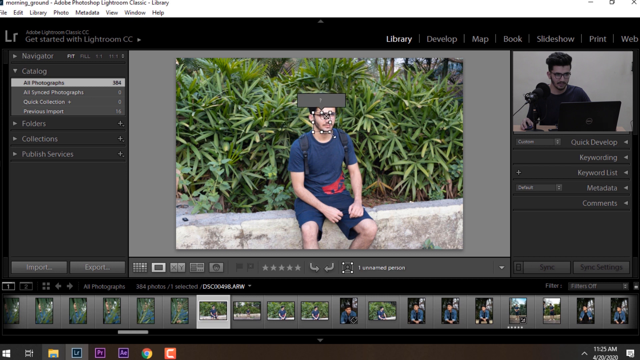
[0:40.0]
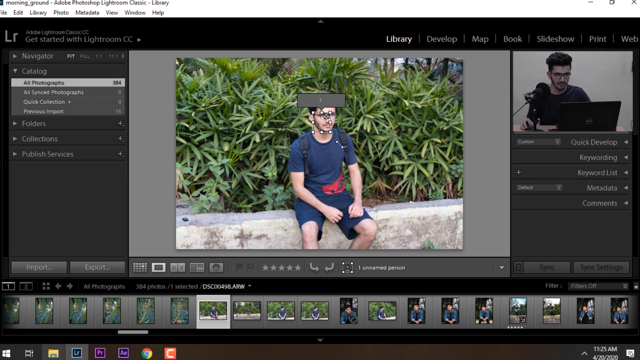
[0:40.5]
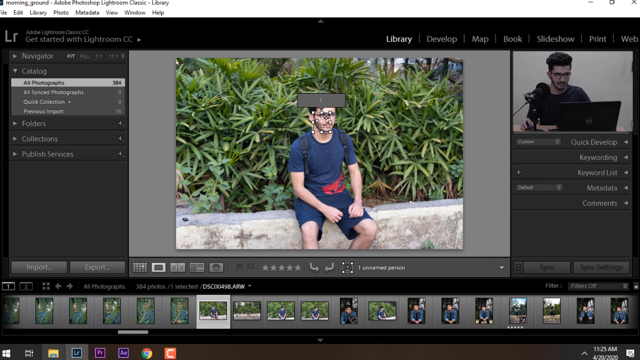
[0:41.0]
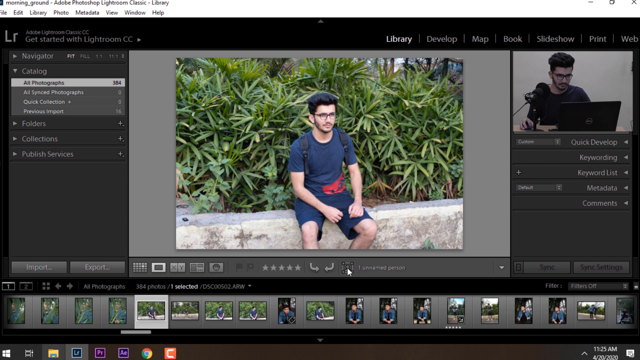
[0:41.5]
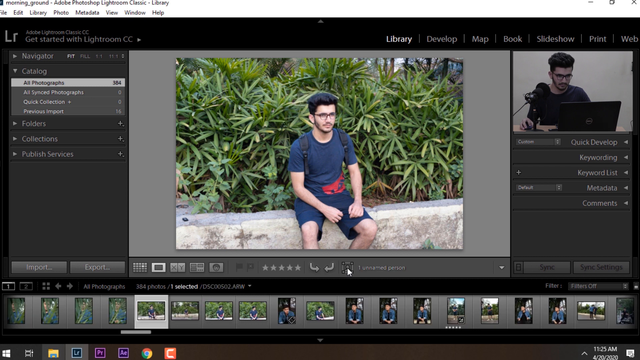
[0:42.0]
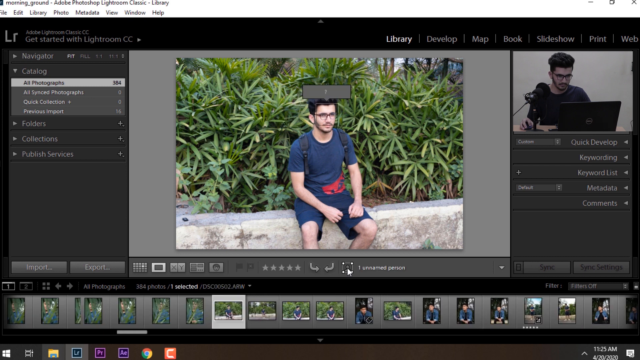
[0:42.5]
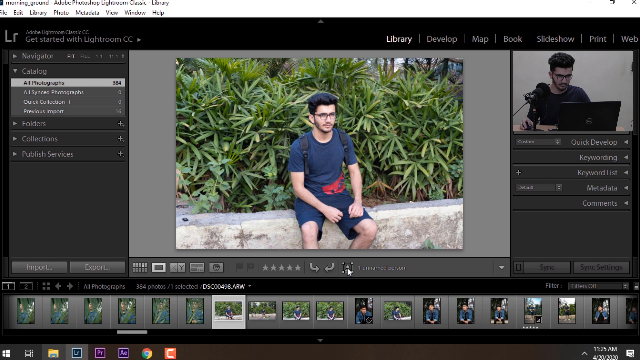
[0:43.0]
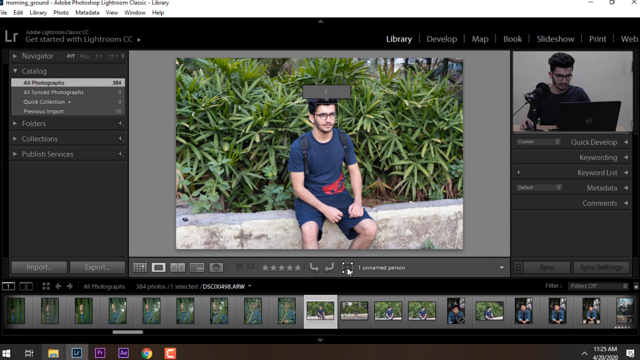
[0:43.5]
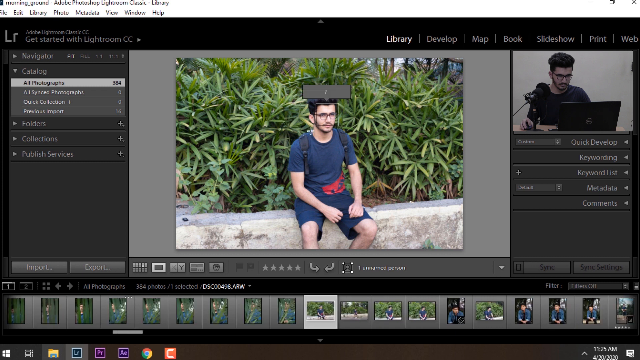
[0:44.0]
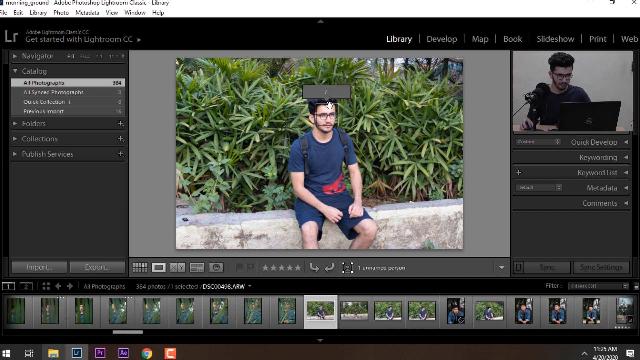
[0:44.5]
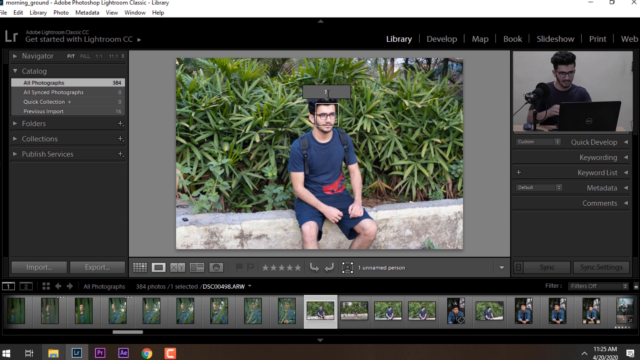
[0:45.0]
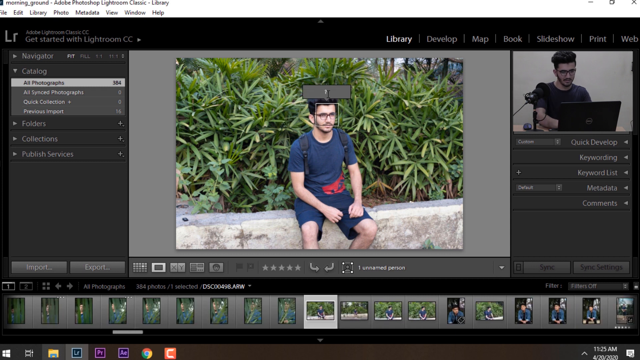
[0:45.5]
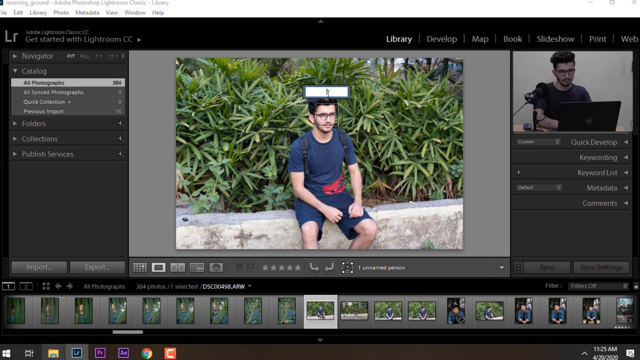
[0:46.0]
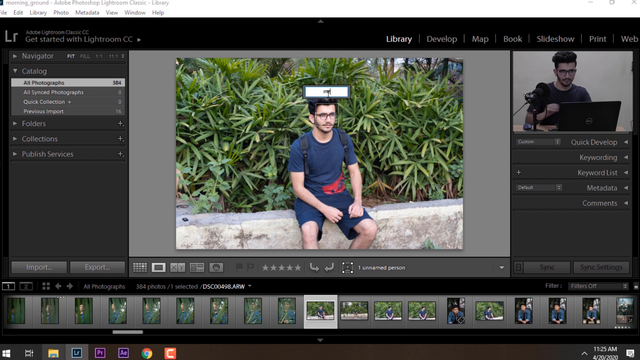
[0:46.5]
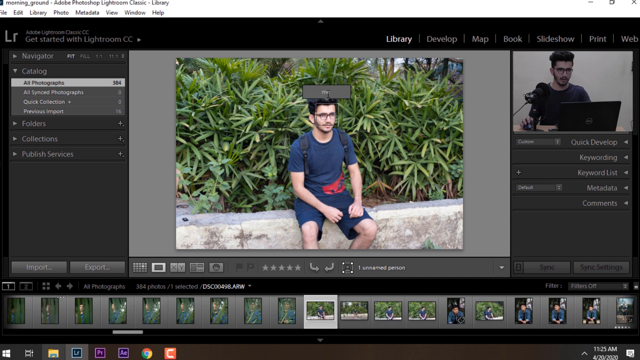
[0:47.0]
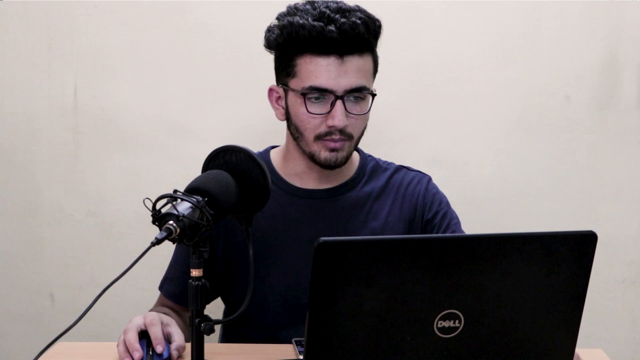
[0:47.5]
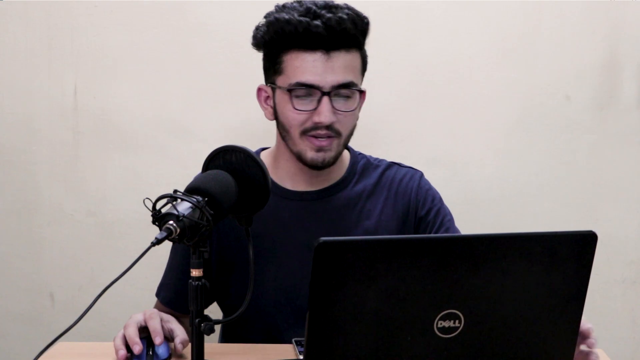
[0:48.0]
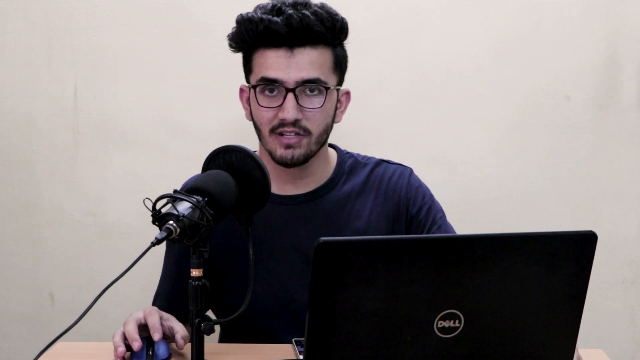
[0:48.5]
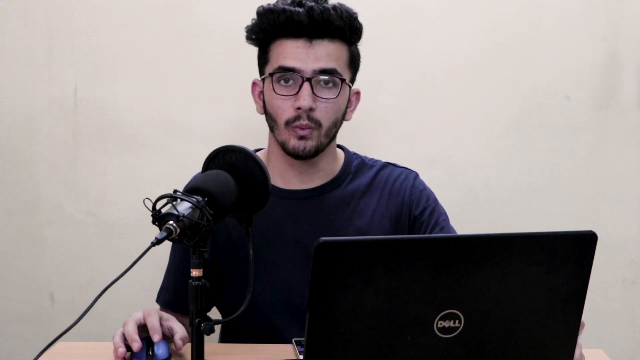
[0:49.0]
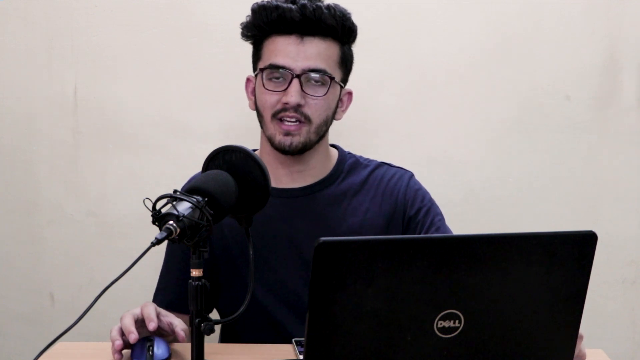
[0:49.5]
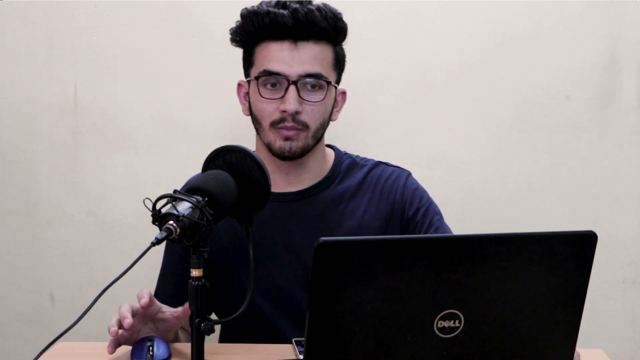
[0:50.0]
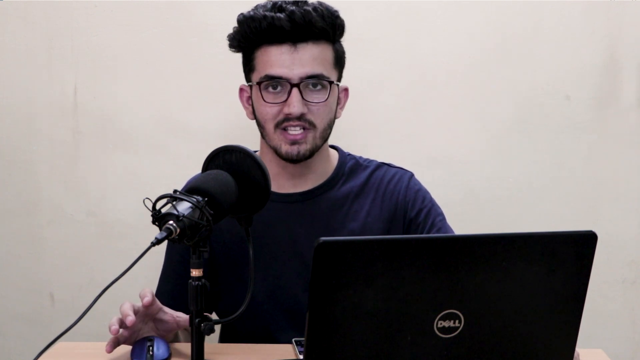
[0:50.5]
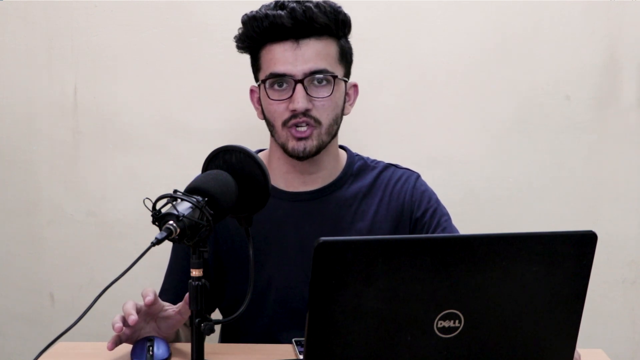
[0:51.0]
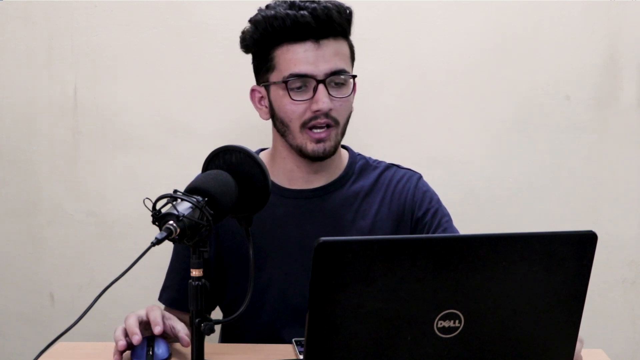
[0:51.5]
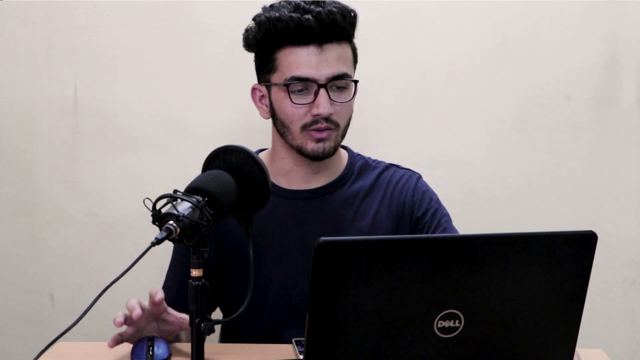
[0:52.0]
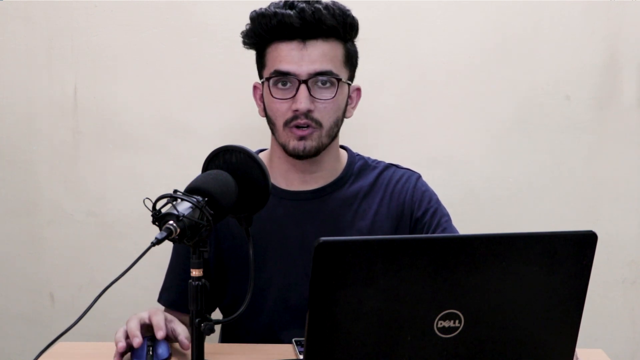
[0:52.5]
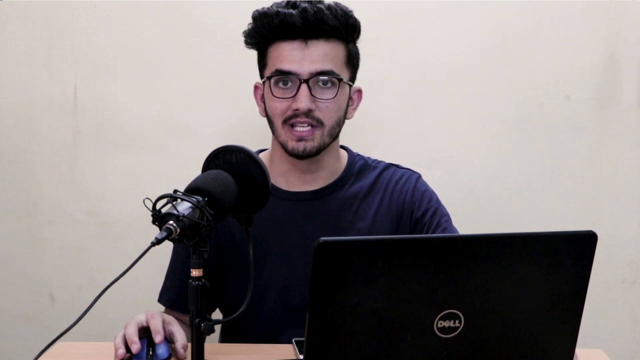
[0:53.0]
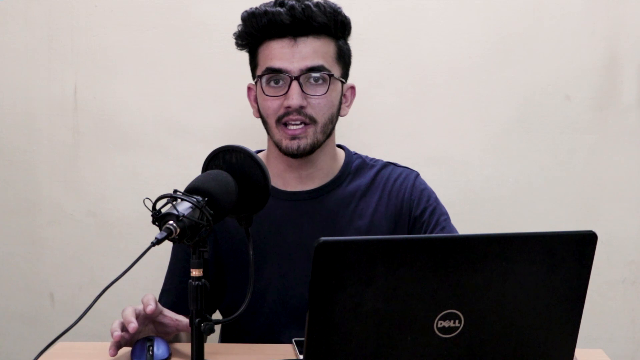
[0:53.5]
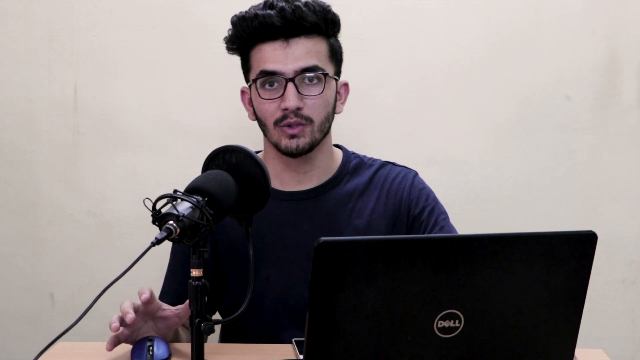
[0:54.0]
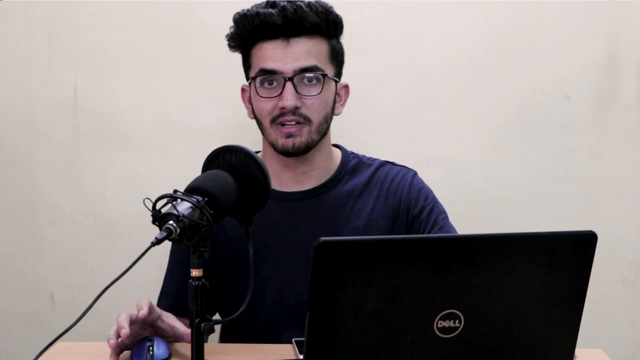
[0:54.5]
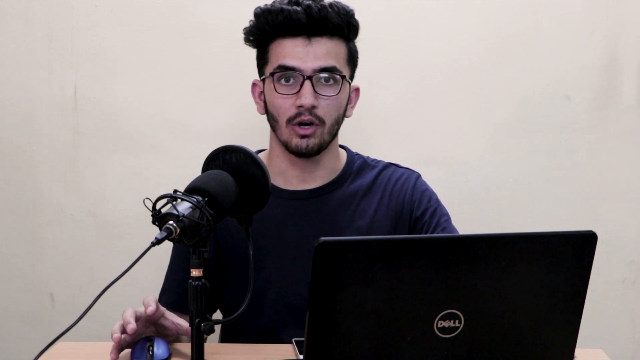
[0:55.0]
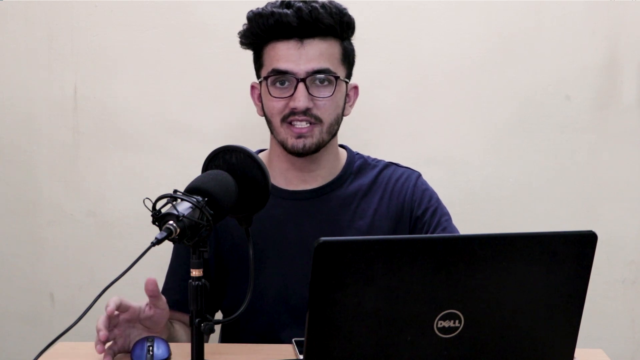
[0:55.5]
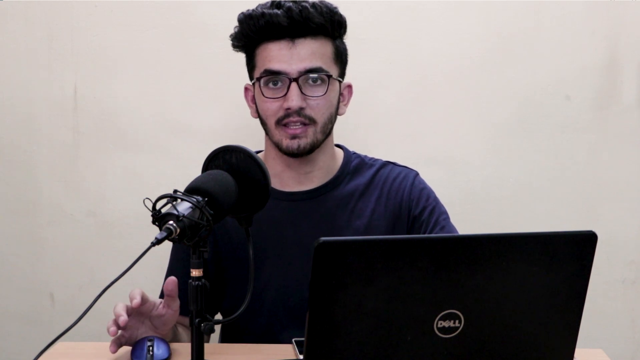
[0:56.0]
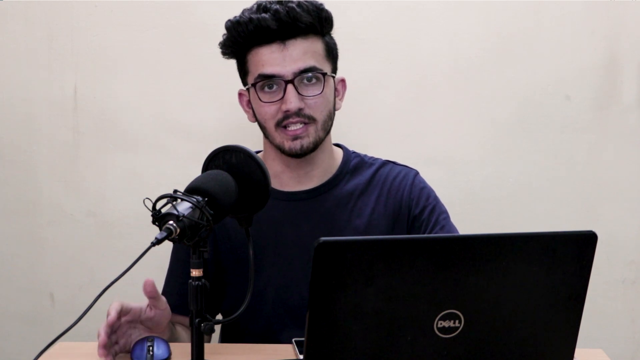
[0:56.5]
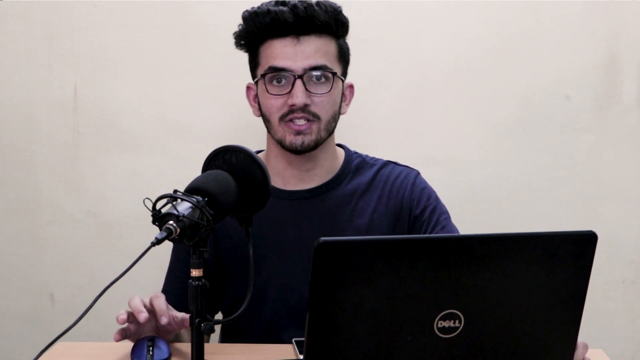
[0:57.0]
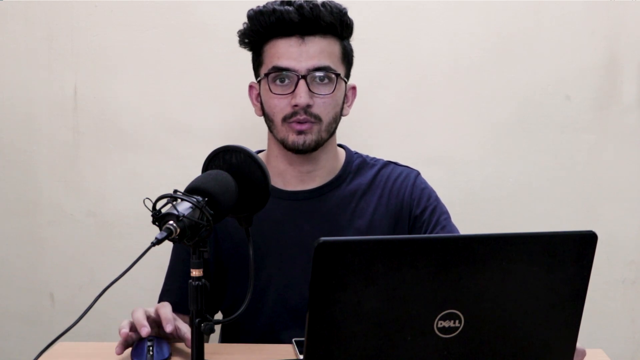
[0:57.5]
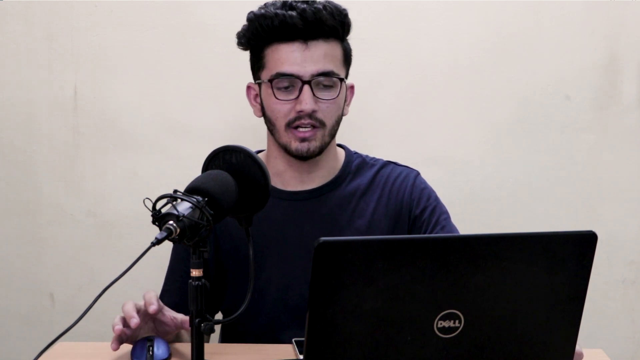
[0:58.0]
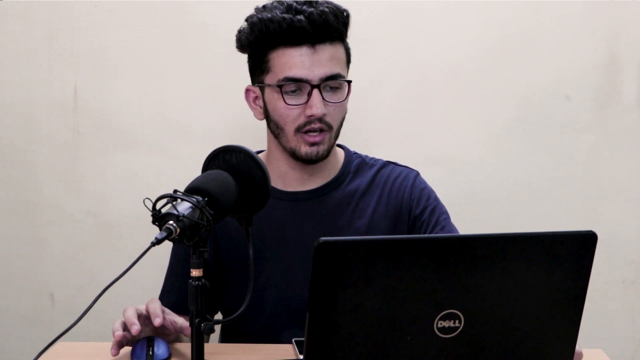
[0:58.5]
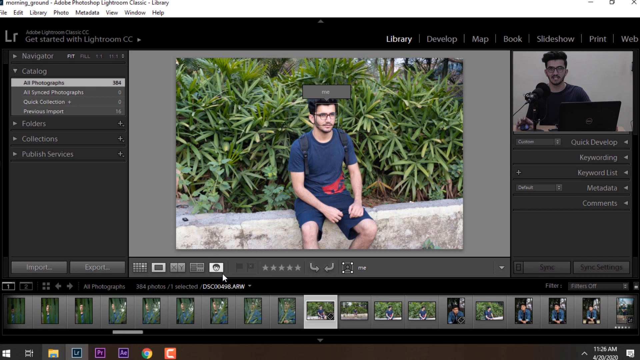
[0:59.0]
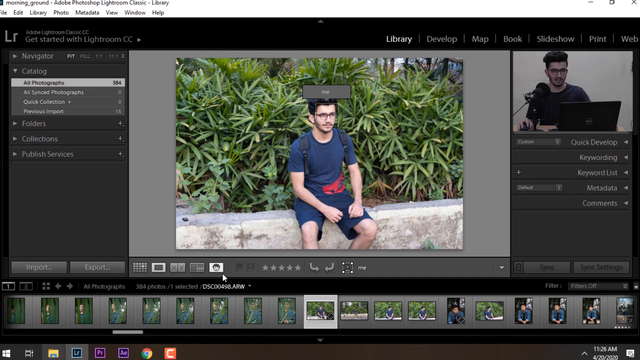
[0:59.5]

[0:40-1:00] The Lightroom software is visible full screen, with a small video of the man in the top right corner, showing both his movement and the screen recording of his laptop. He continues working on the image of himself, selecting his face with the selection tool, which brings up a text box above the selection box for inputting text. He enters illegible text in the box, the window closes, and the video cuts back to a view of him behind his computer and microphone against the white background. He speaks to the camera for a few seconds, seemingly explaining something to the viewer.